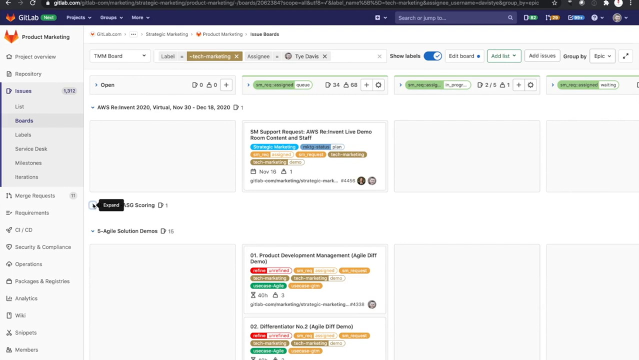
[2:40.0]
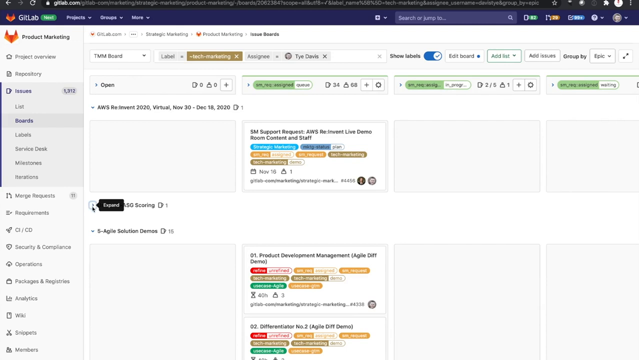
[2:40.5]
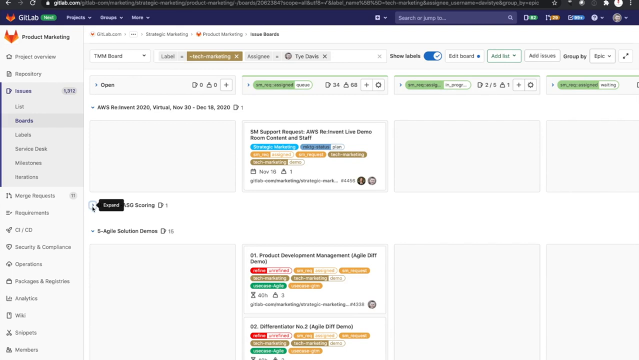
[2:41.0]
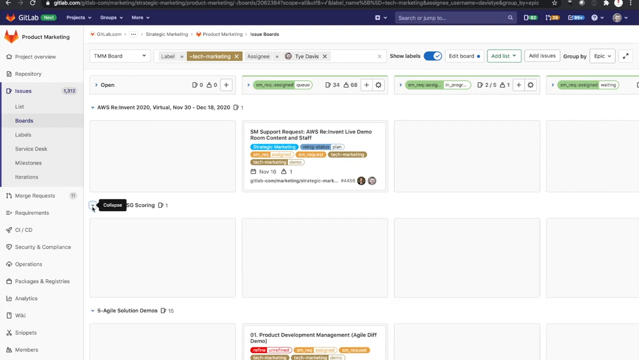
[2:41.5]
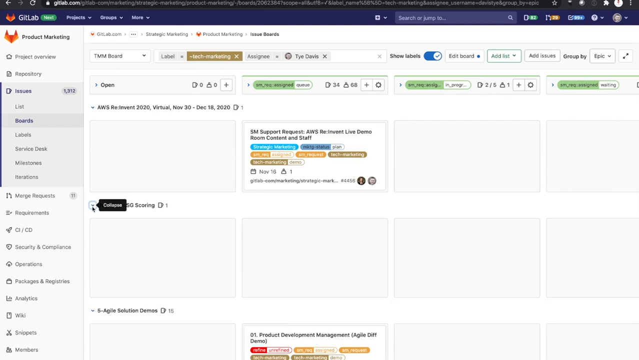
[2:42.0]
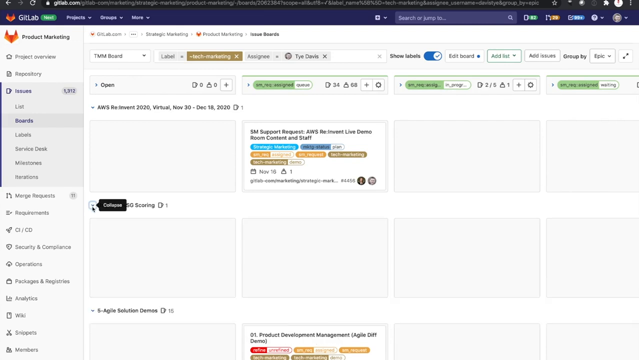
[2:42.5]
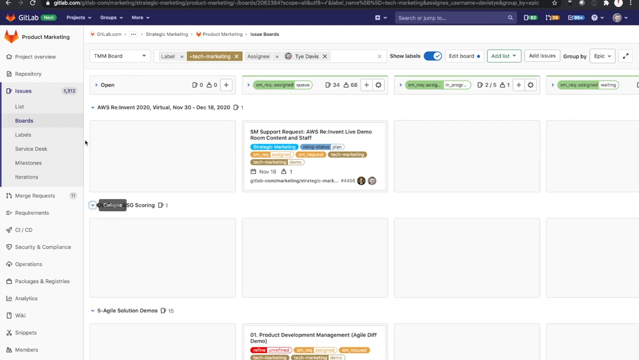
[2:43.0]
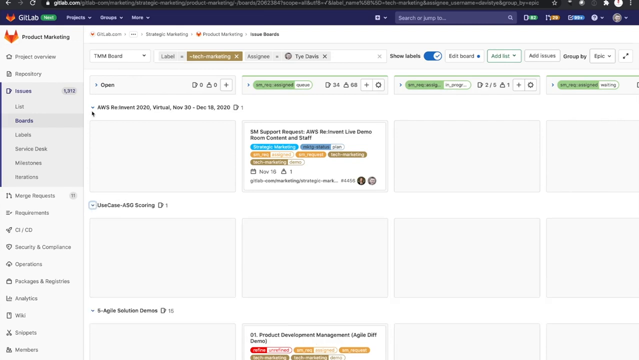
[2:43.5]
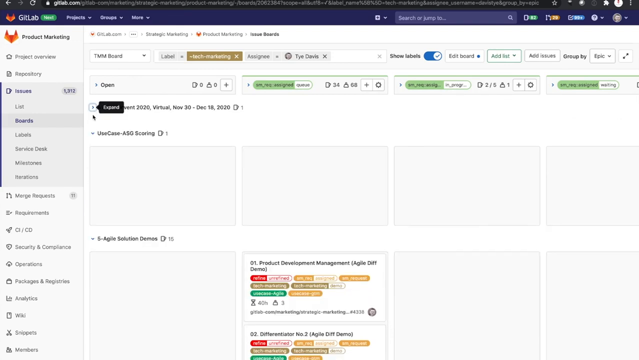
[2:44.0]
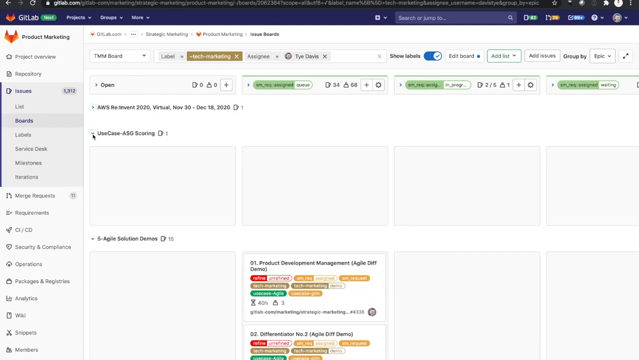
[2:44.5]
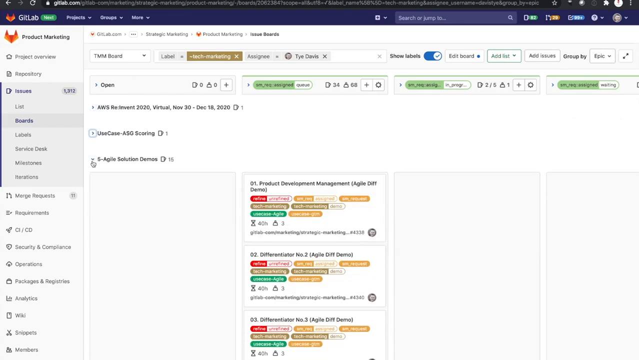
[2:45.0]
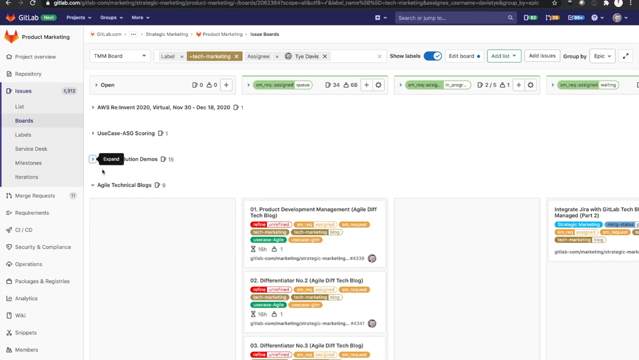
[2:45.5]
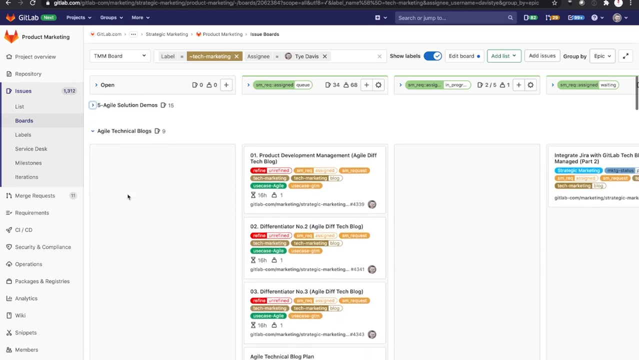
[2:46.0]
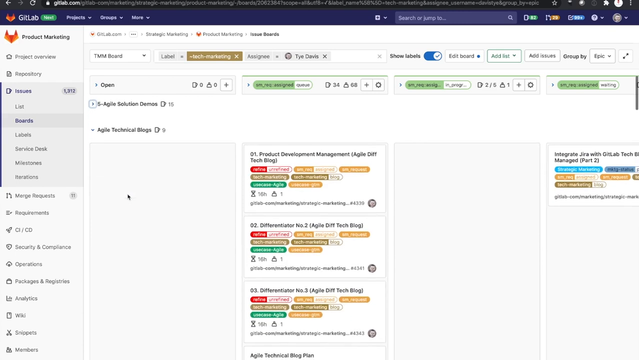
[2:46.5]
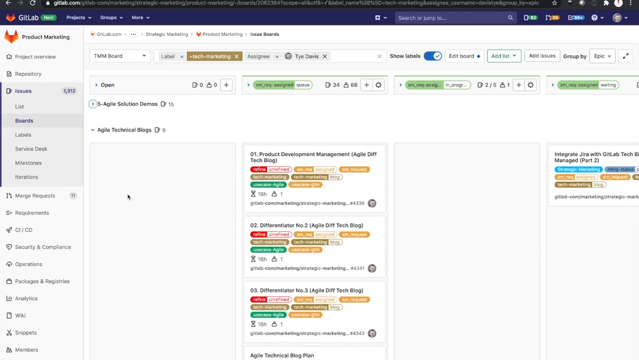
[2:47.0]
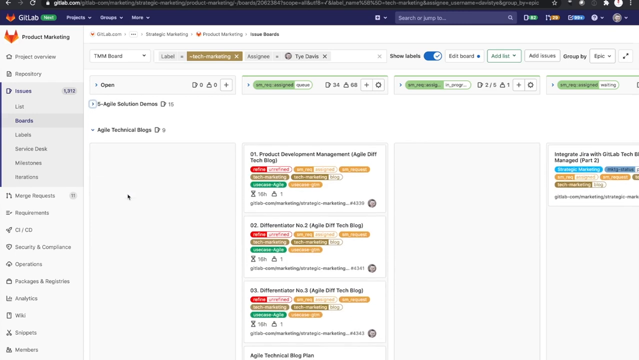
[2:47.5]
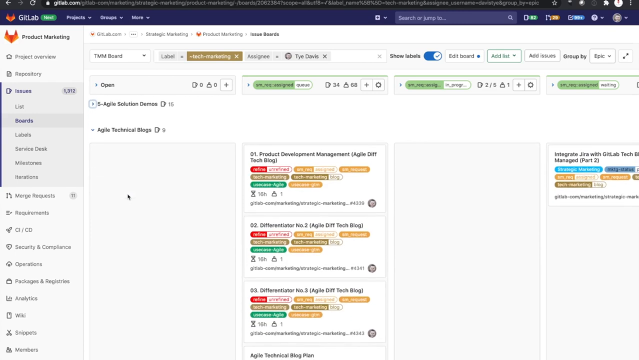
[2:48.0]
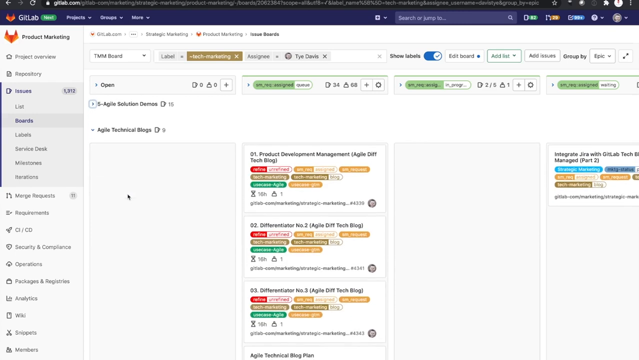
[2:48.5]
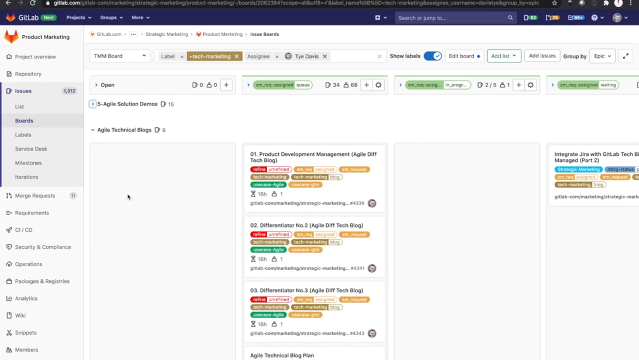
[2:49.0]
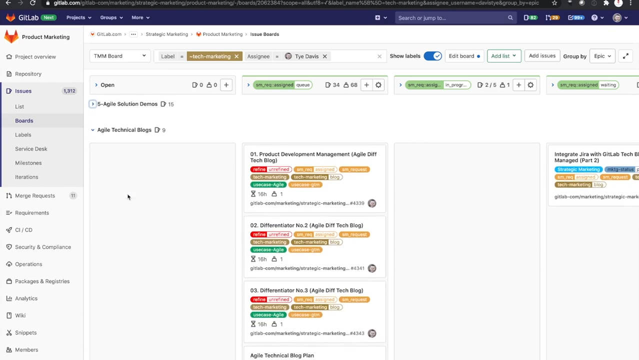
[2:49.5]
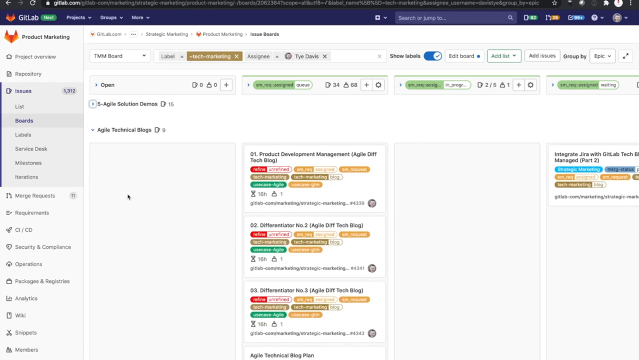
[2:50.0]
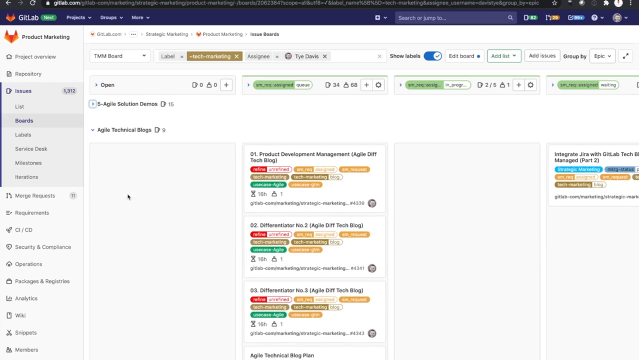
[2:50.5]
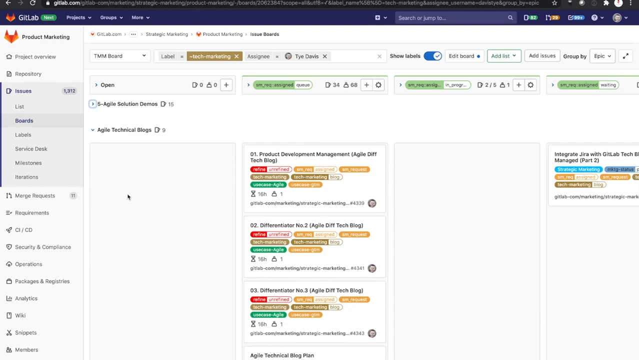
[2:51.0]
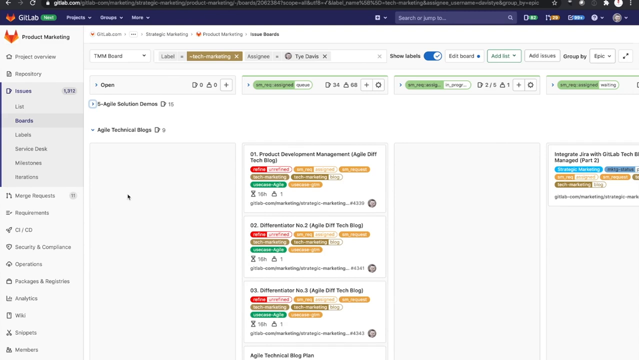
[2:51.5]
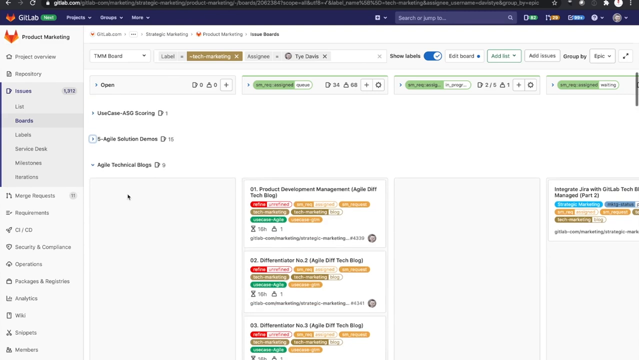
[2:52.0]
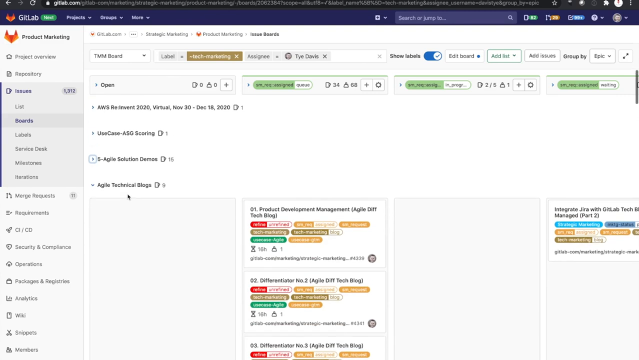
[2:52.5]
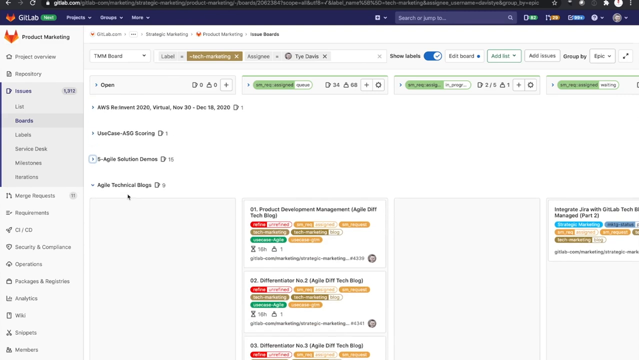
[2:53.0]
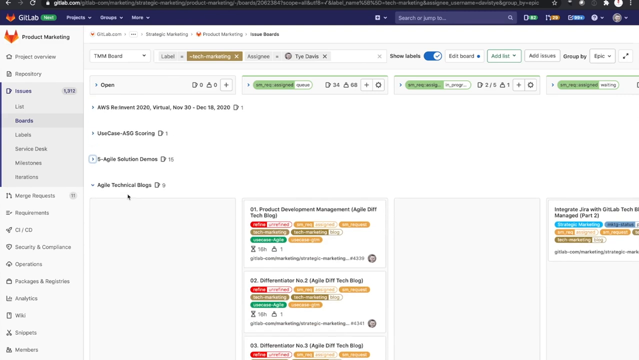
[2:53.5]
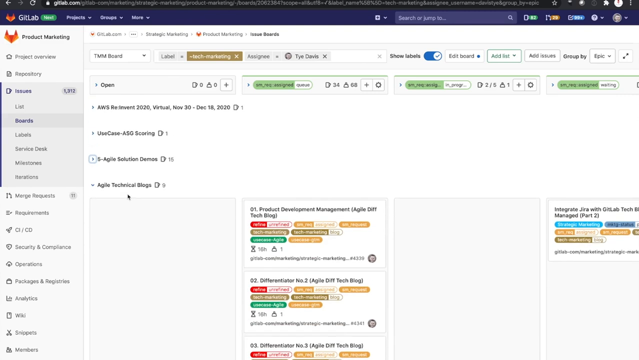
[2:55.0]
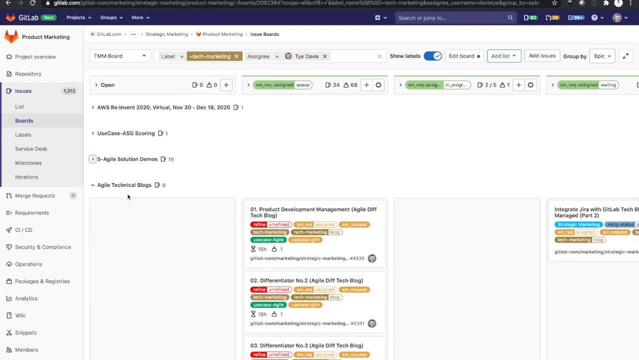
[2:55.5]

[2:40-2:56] The person is in the GitLab software, with something in the top left section of the screen and a number of different colored sections across the interface.